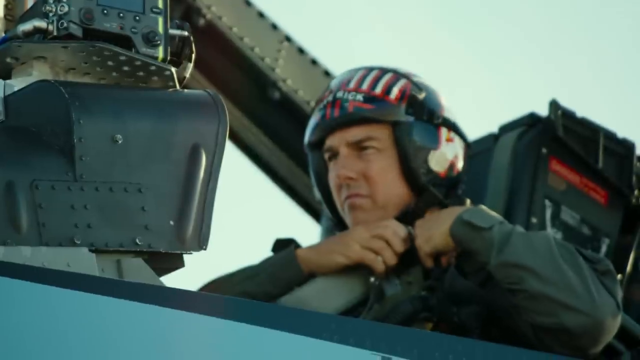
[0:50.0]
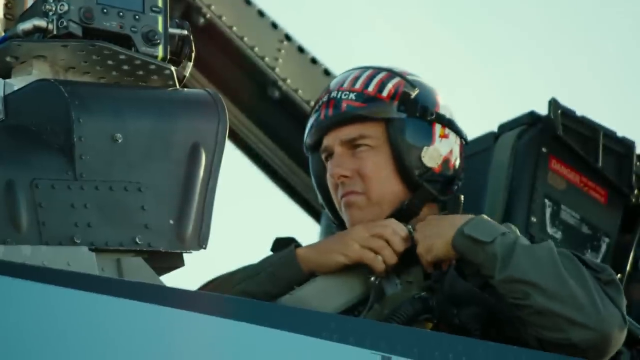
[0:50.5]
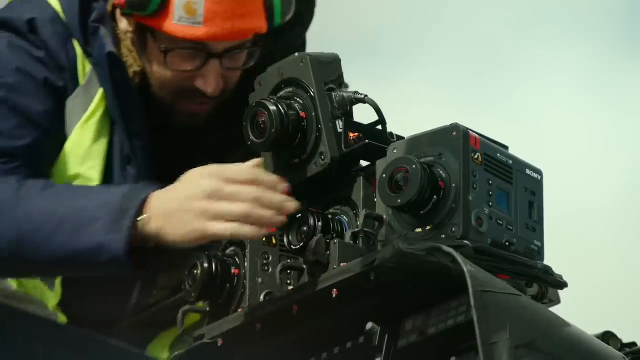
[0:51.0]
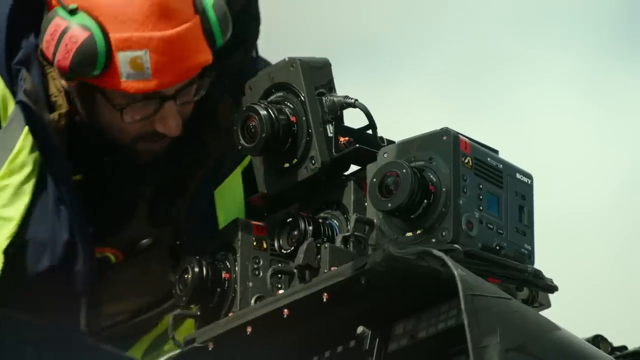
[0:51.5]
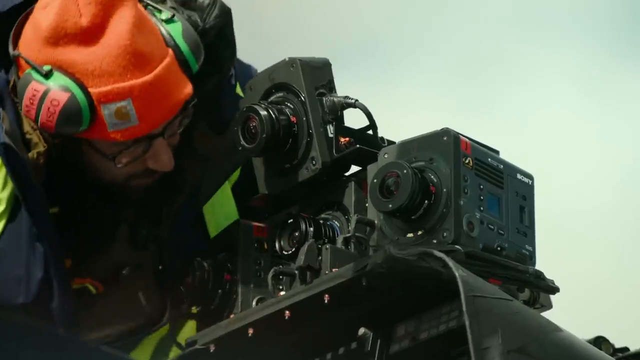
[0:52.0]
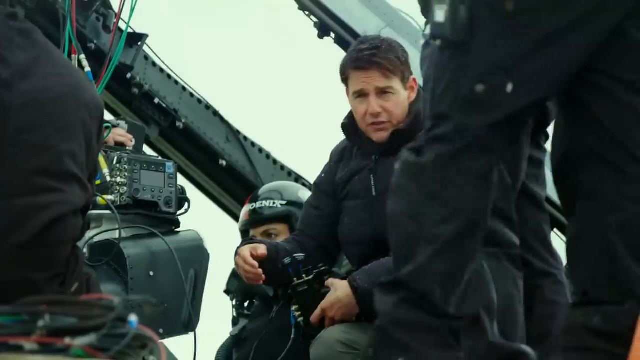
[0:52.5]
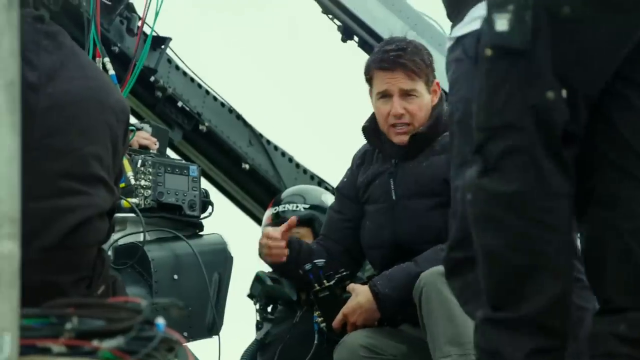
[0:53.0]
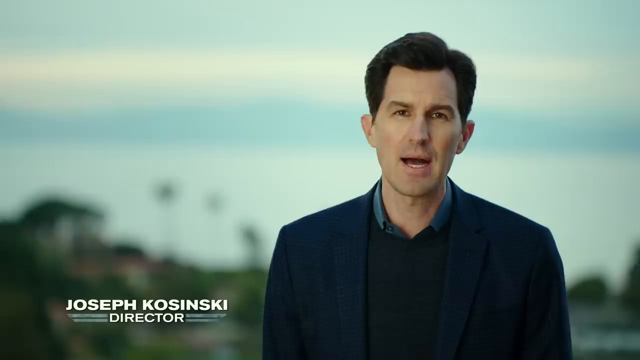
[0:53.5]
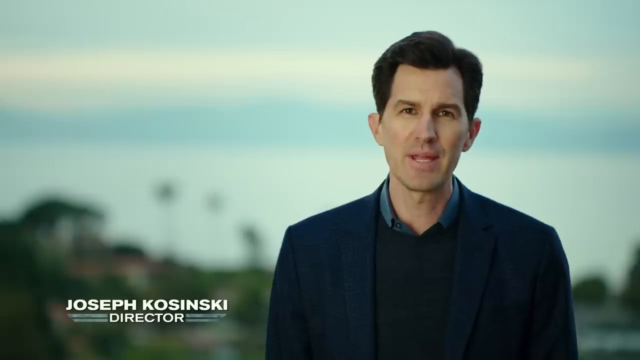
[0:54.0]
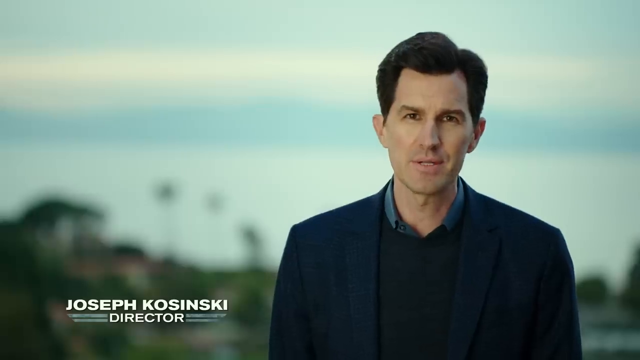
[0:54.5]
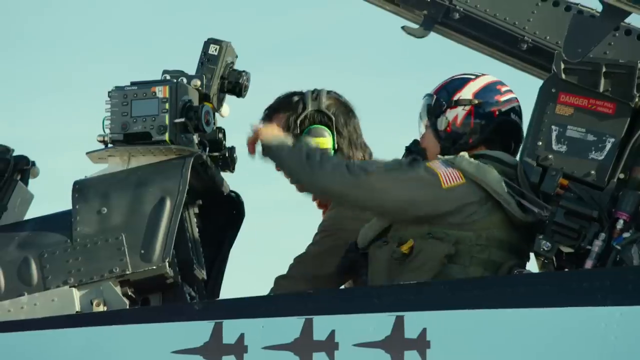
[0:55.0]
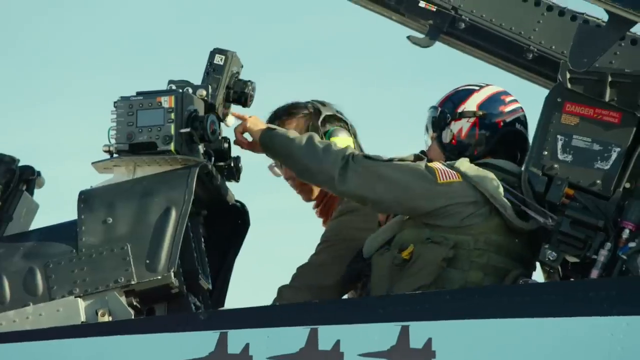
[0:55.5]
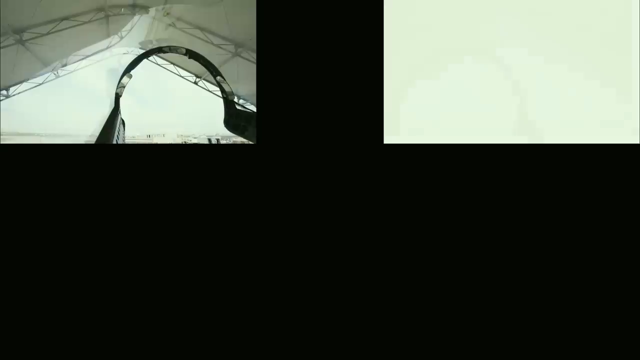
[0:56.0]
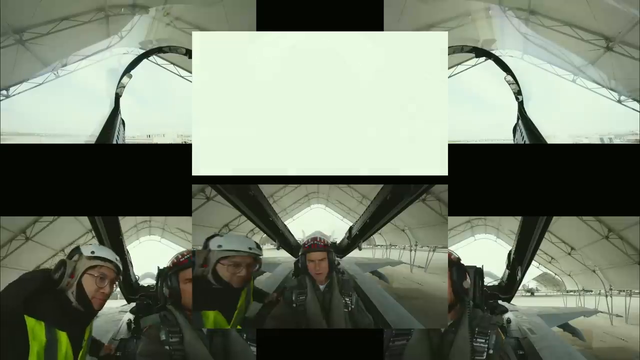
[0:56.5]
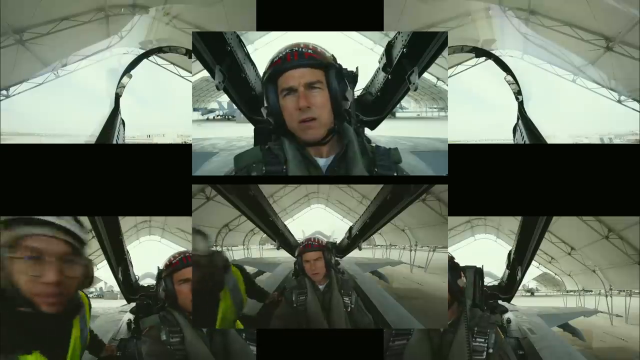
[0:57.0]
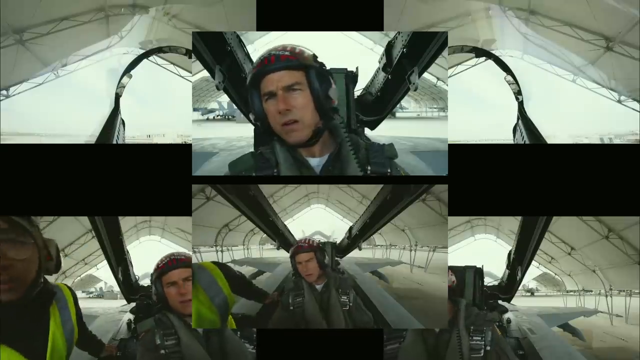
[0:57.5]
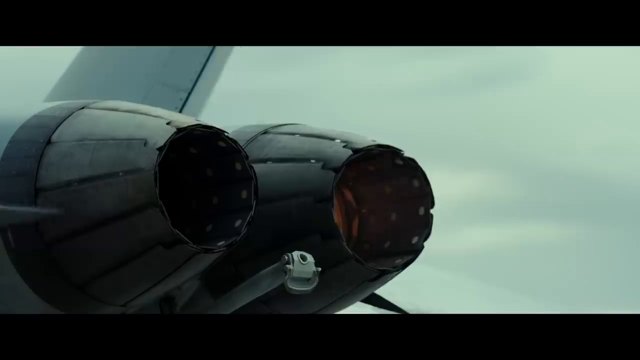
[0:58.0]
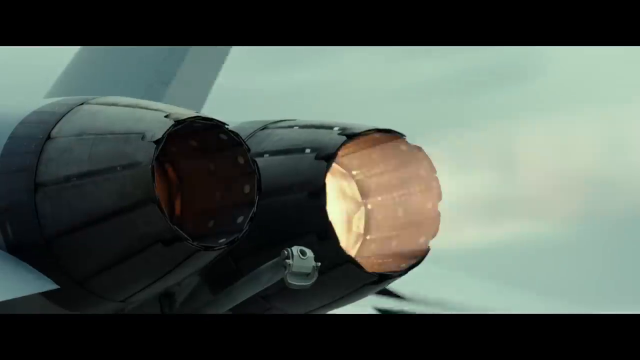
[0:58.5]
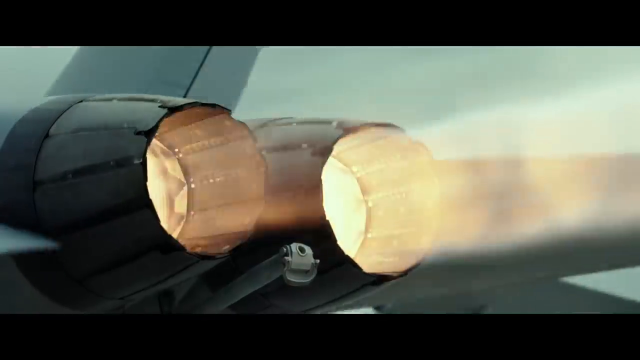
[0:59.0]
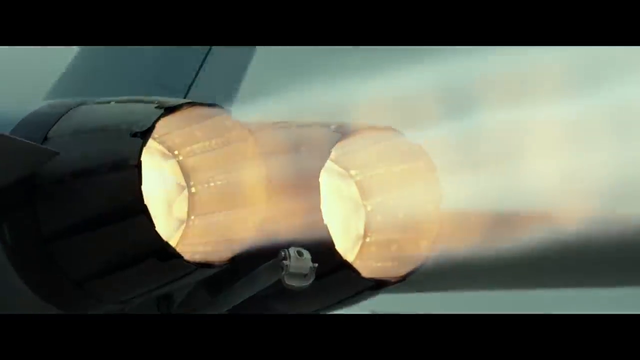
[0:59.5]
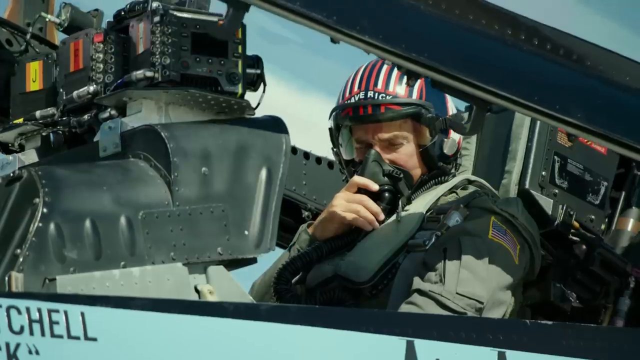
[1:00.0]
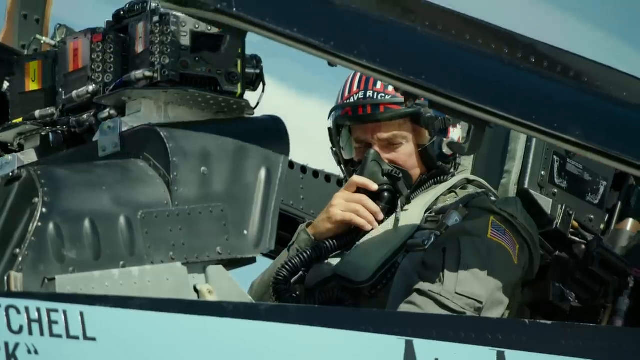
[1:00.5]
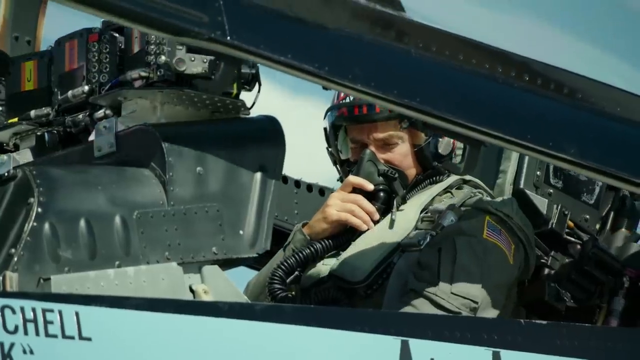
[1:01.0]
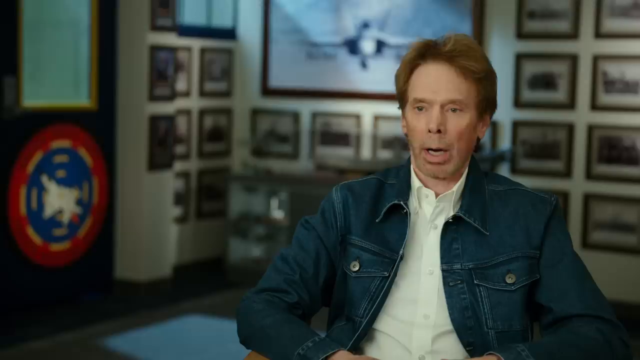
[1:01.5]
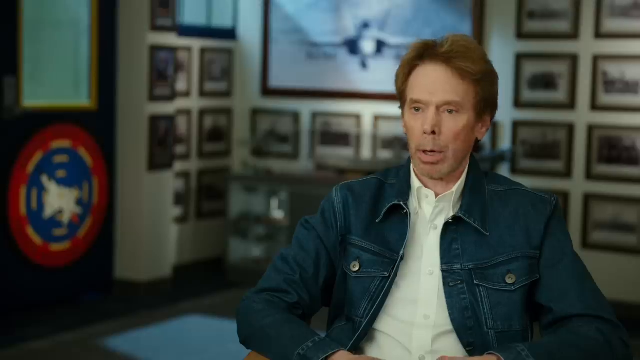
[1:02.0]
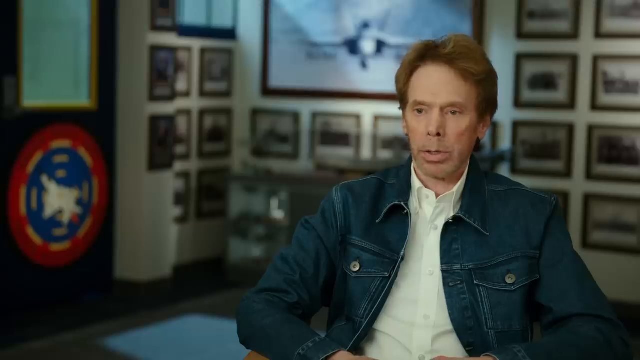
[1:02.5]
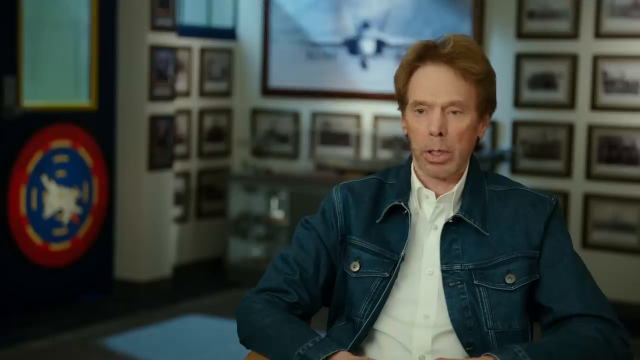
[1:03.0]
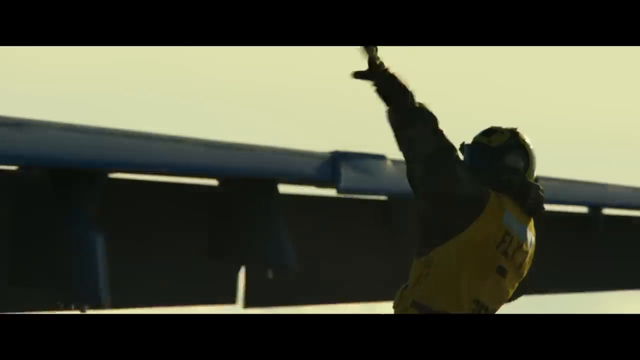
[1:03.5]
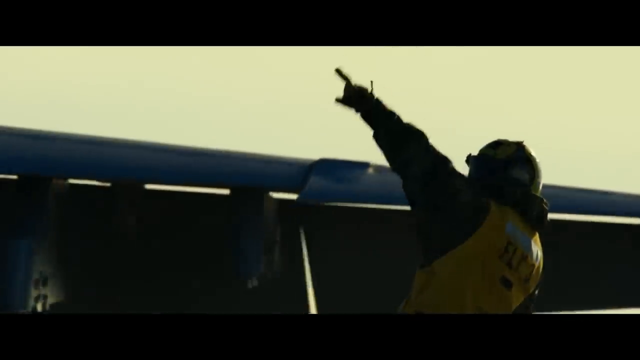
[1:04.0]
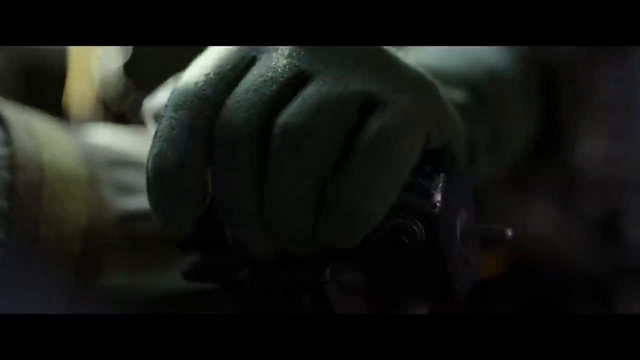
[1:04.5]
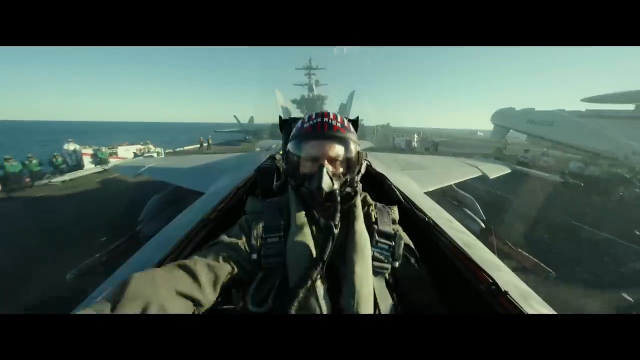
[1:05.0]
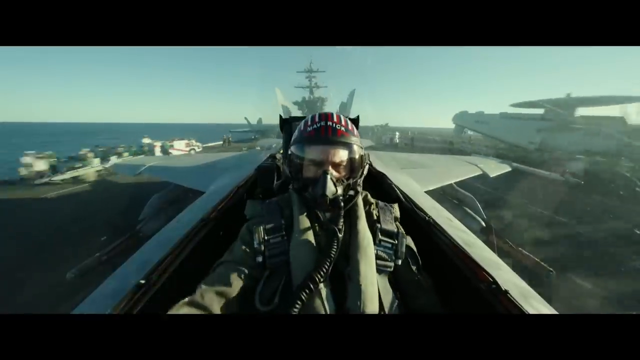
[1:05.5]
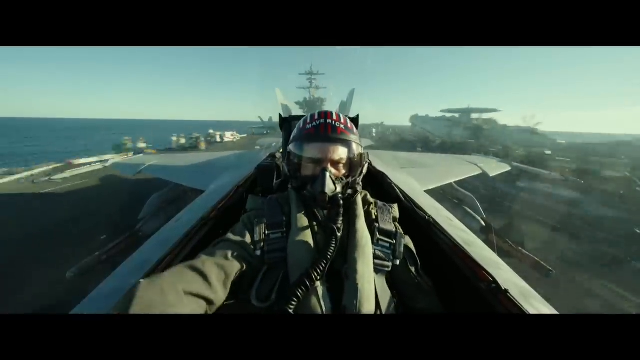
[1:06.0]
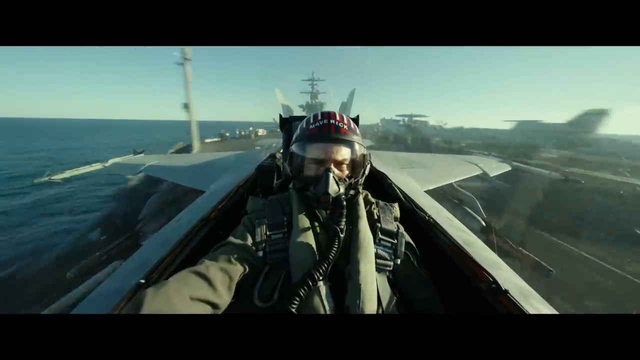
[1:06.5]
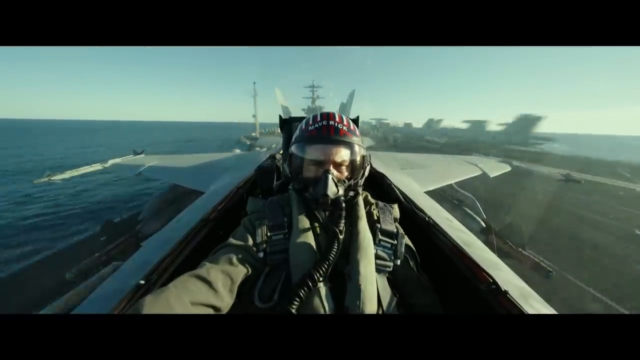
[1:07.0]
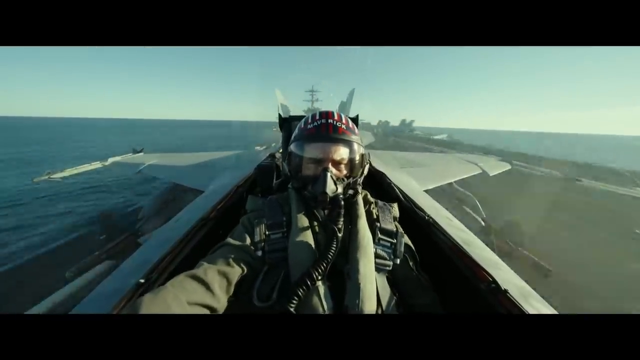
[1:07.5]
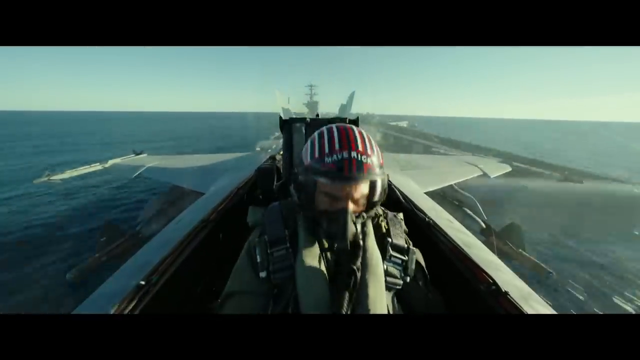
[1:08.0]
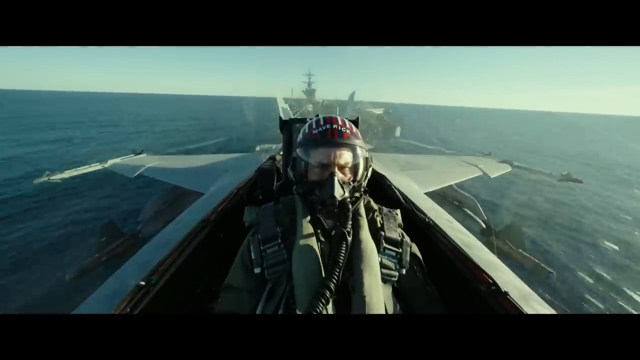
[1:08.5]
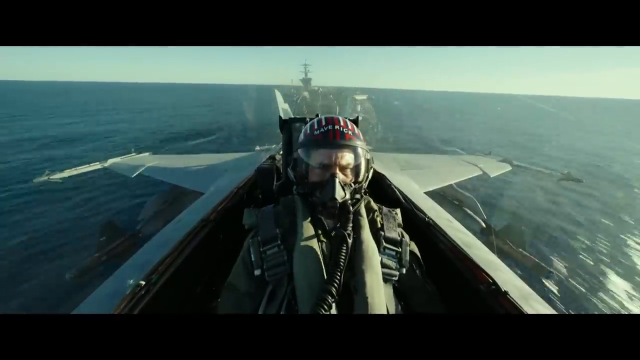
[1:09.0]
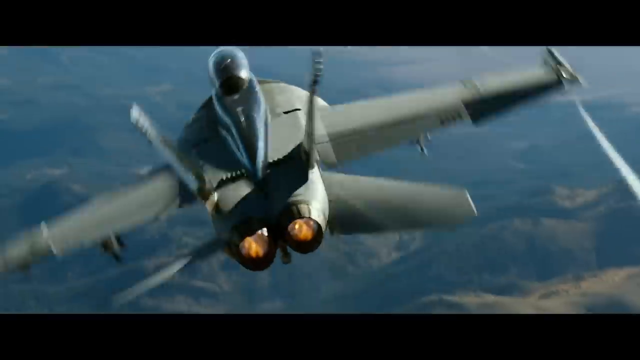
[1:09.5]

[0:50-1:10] People watch someone out in the air, Maverick, putting on a show for them. It seems to be a competition among three people: a woman and two men, competing against each other in aircraft. Other men wearing green look like soldiers; some look old and some young. There are many people. A man touches an aircraft after it has come down to the ground; he looks happy, but later some people do not look okay. Visible text includes "phonics", "payback", "hope", "Maverick" and "June 2020". Jerry and Joseph appear, apparently explaining what is going on, and another man seems to be a director.